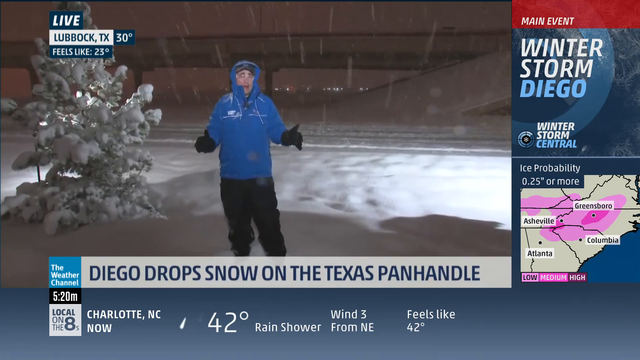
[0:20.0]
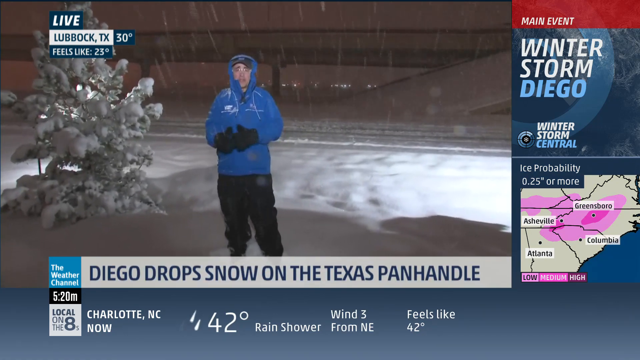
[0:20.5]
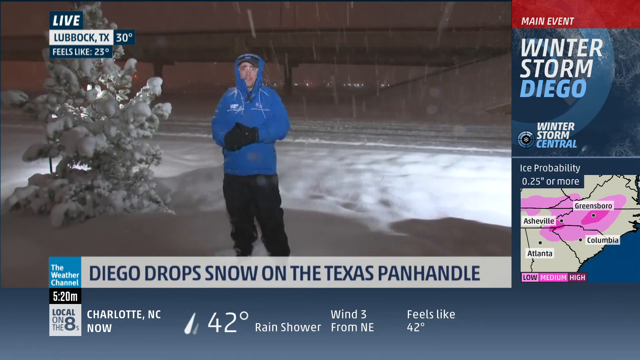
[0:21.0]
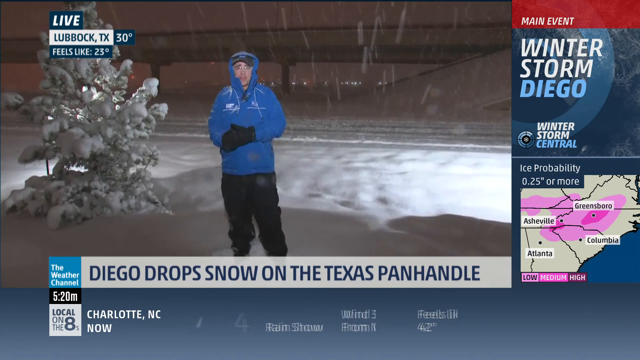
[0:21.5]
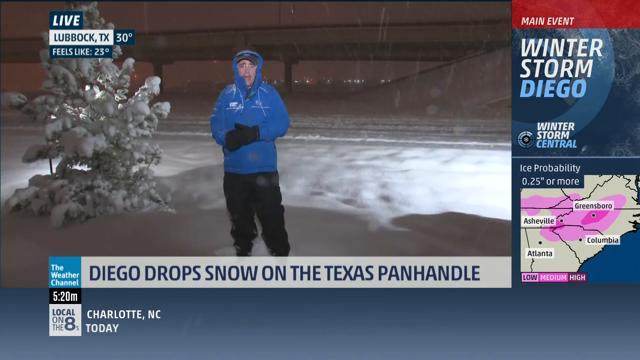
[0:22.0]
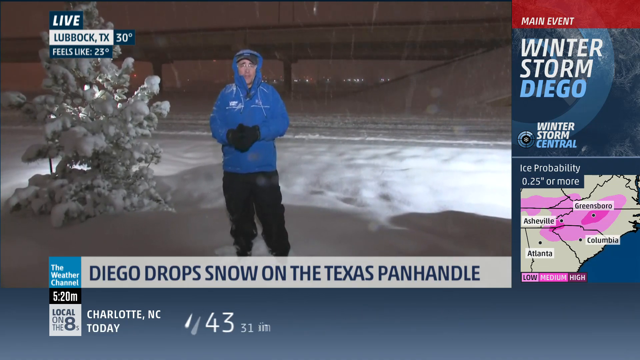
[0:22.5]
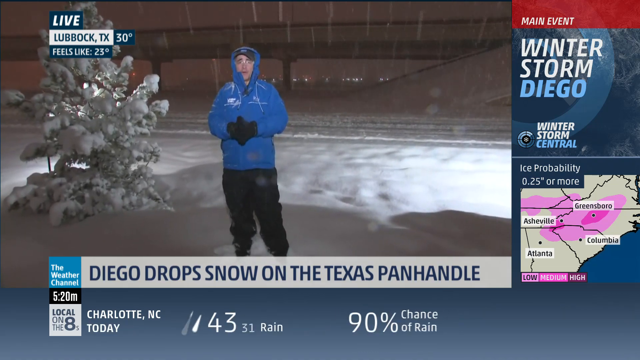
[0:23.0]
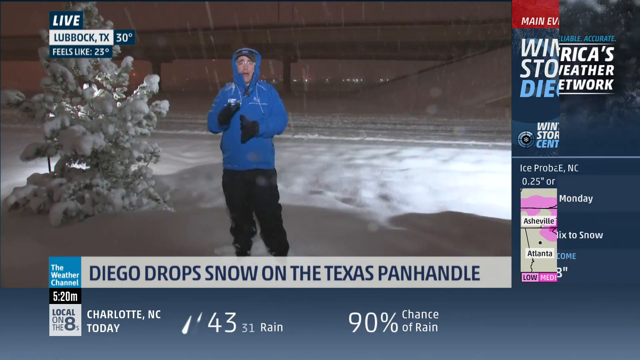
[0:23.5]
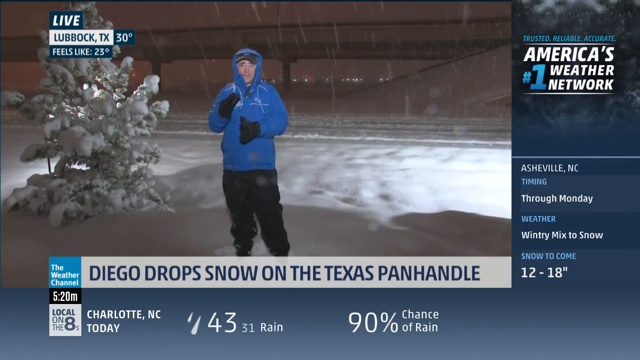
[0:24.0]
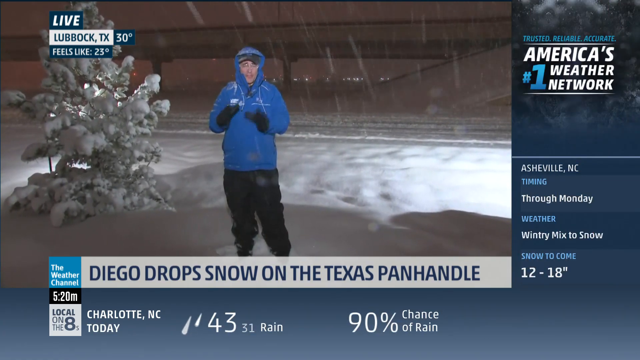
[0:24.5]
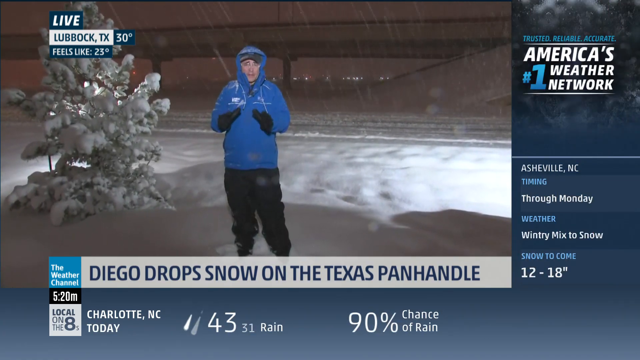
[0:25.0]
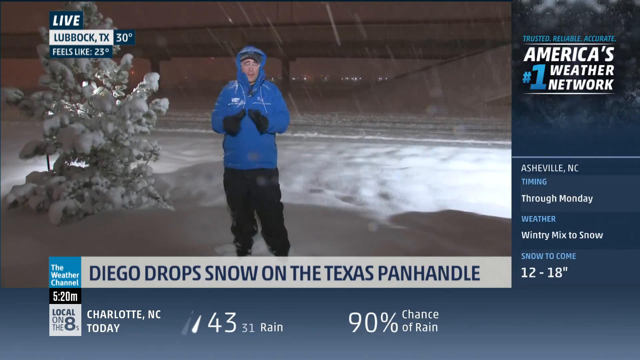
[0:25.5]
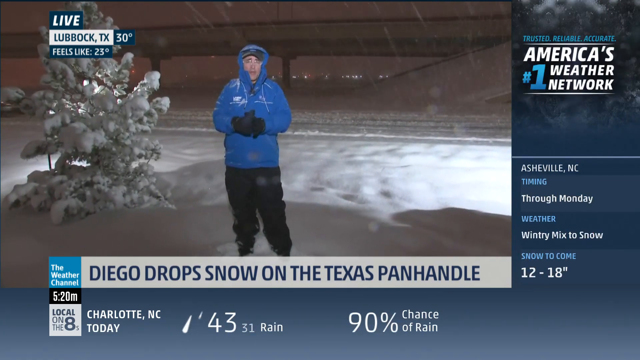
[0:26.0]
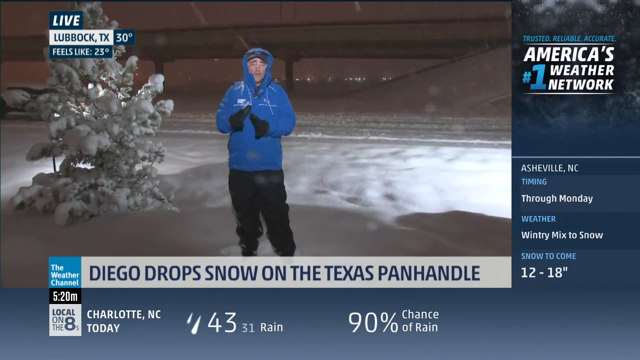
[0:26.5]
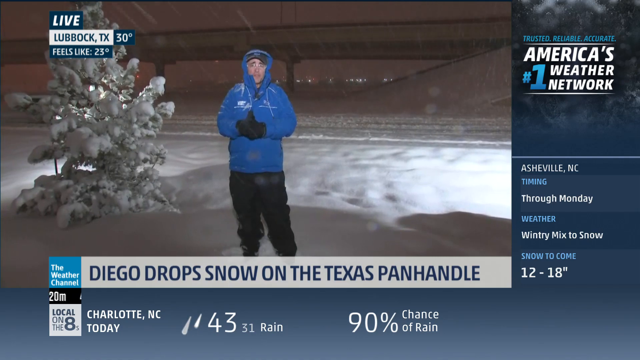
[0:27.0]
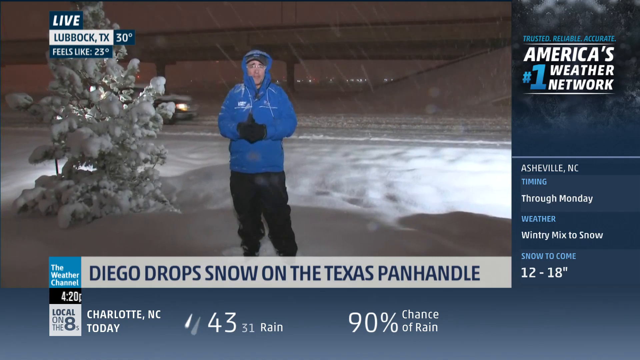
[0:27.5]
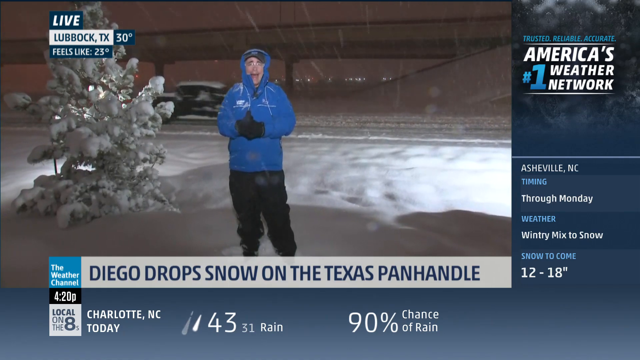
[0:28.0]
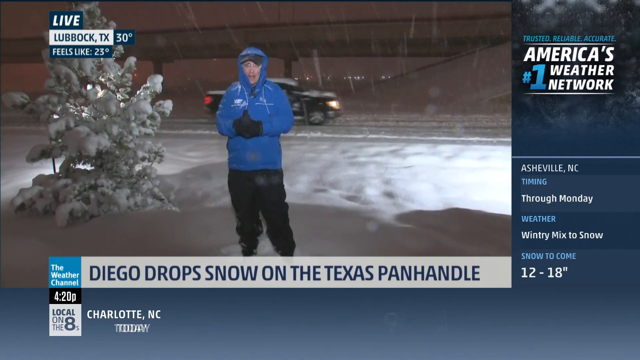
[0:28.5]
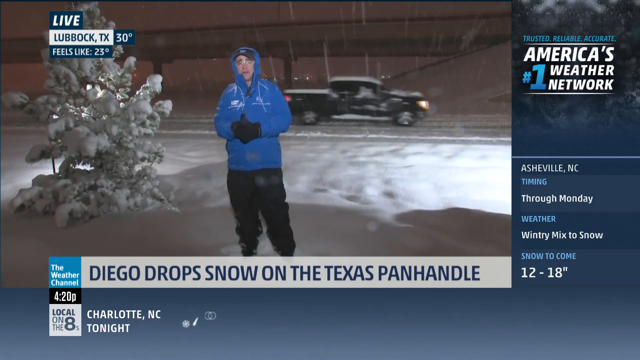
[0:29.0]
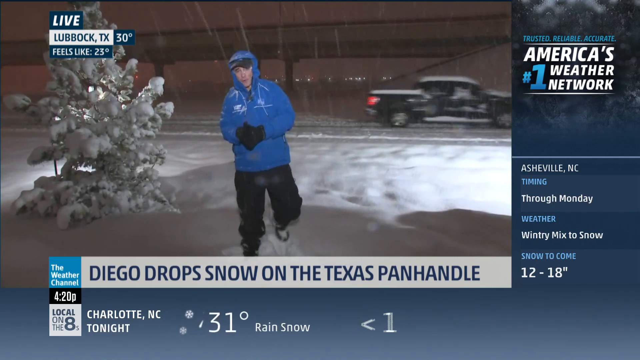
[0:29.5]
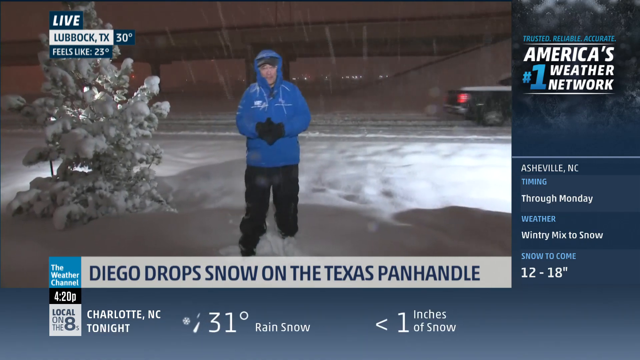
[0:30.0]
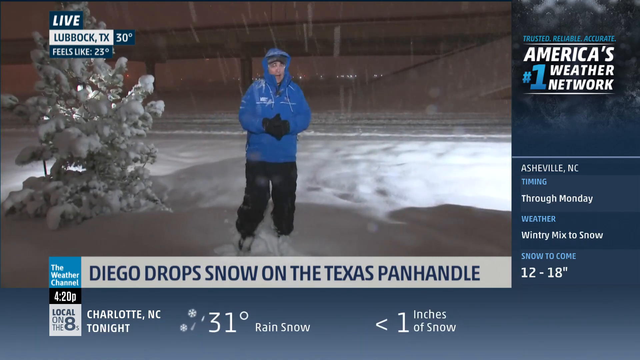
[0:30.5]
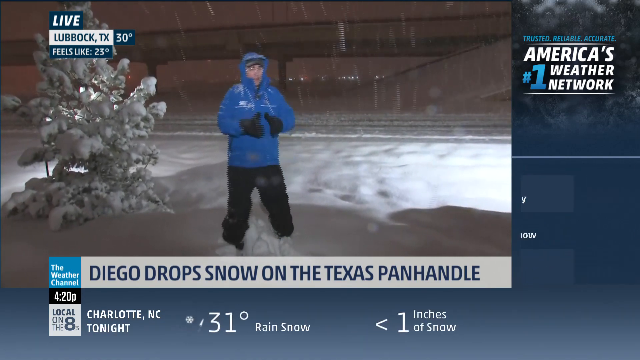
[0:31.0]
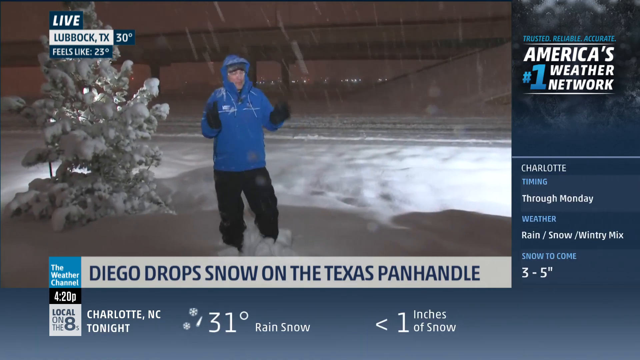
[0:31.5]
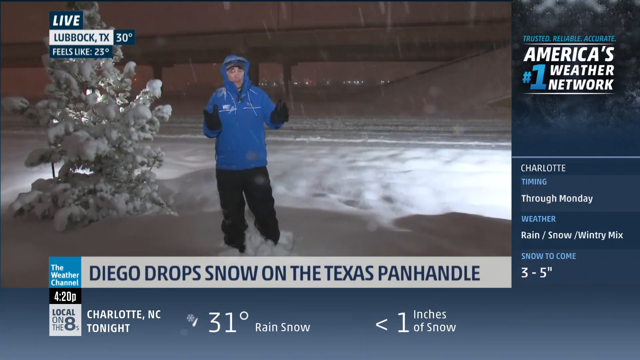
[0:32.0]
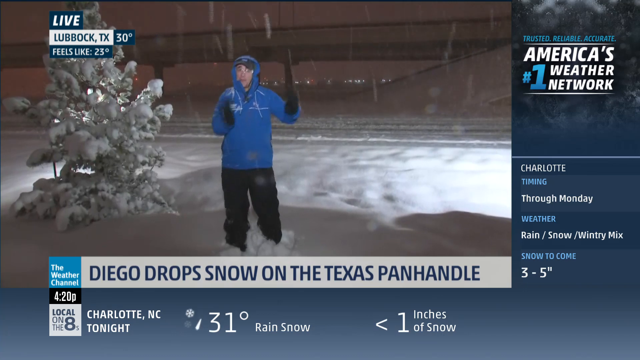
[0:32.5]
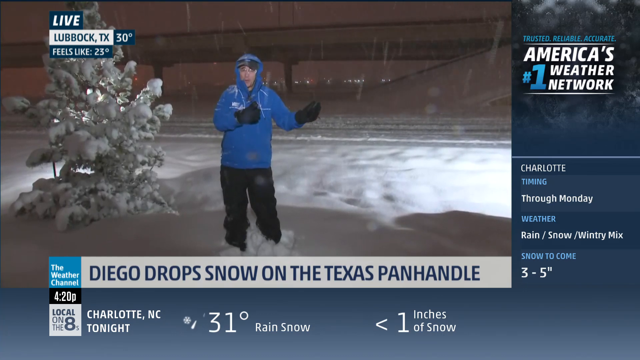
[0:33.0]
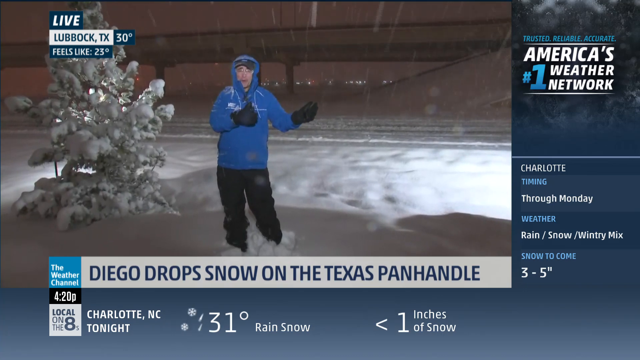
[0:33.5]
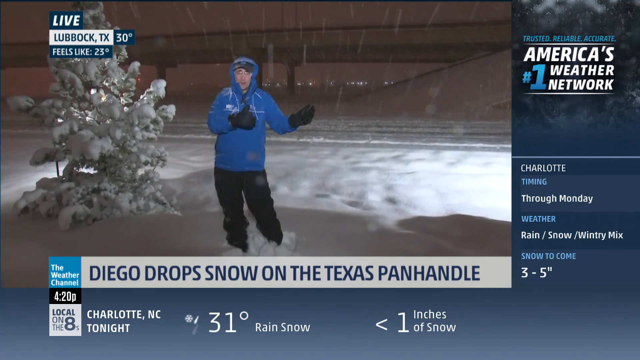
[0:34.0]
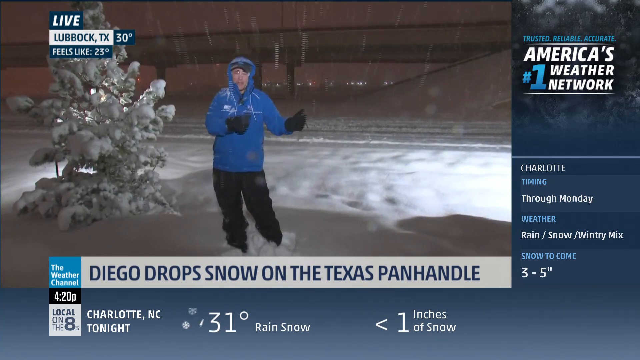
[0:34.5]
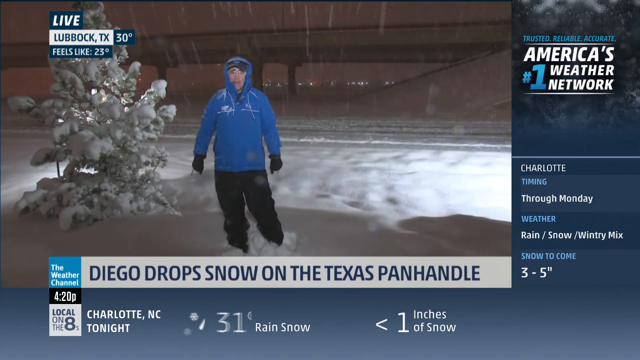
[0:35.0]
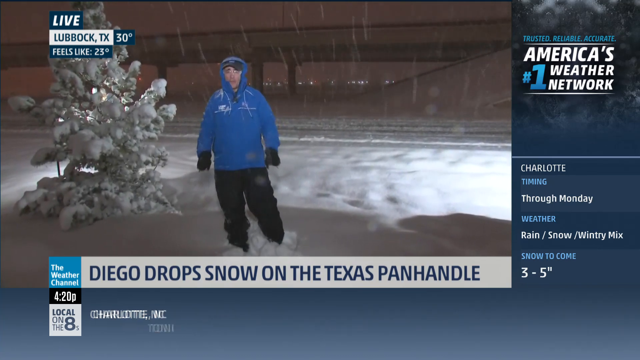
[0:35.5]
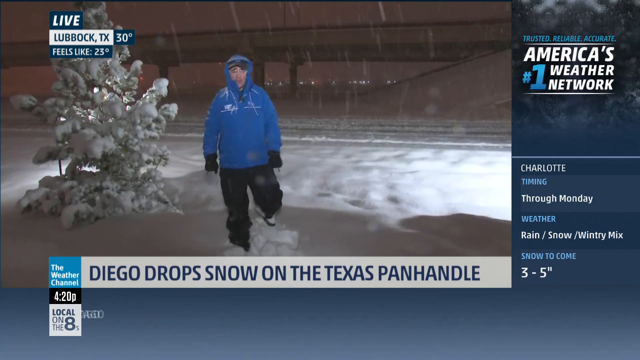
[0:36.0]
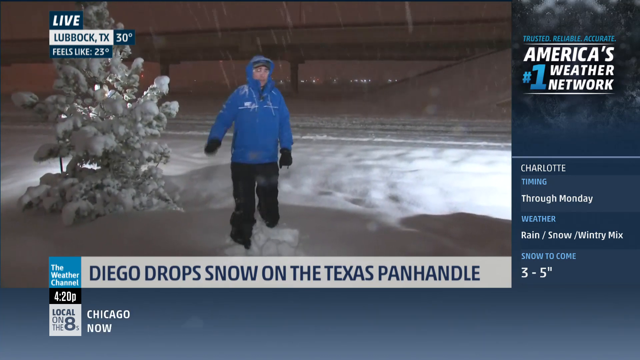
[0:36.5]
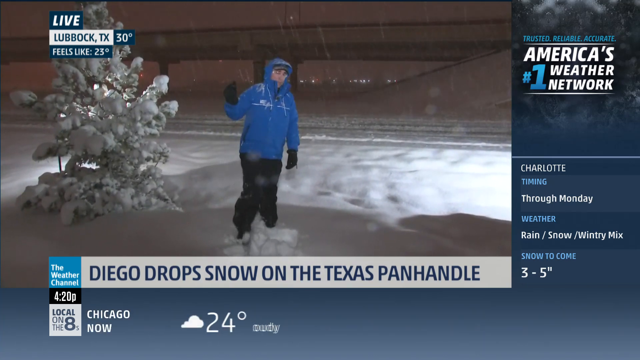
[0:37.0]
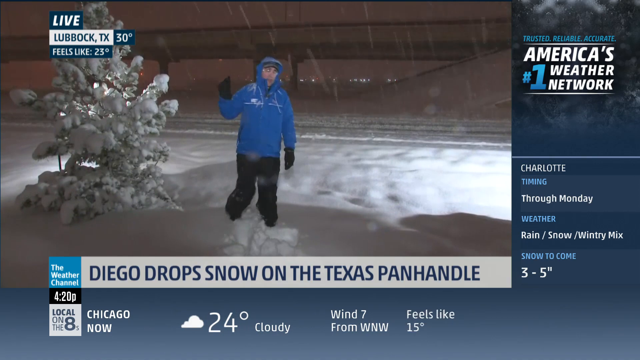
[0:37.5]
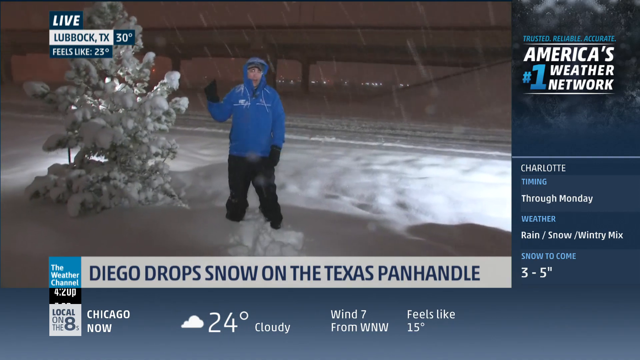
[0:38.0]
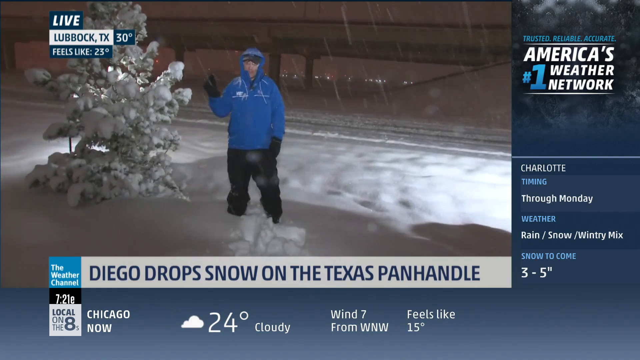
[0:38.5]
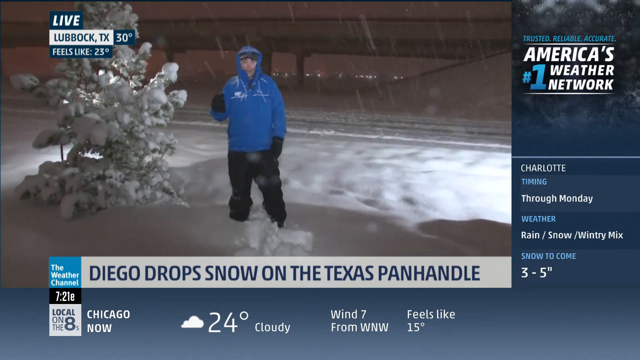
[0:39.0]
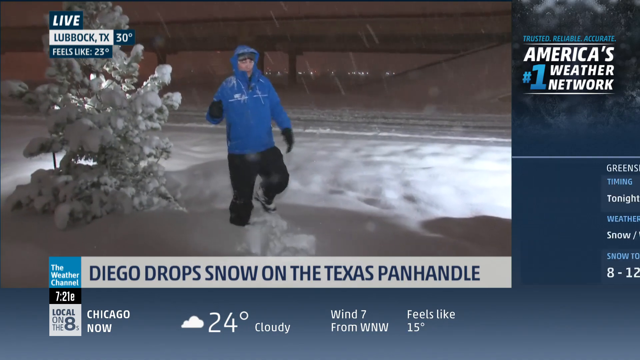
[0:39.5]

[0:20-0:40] The live weather report comes from Lubbock, TX, where it is 30 degrees and feels like 23 degrees. The Weather Channel is identified as America's number one weather network, trusted, reliable and accurate. It is snowing, and cars pass on the road. The newsreader wears a blue jacket, a black cap, gloves and black trousers. The trees and everything around are covered in snow. The broadcast also shows the forecast for Asheville, NC through Monday: a wintry mix to snow, with 12 to 18 inches of snow to come. A forecast for Charlotte, NC shows 31 degrees, rain or snow tonight, and 1 inch of snow. The newsreader's shoes sink into the snow, and he seems to be struggling to move.